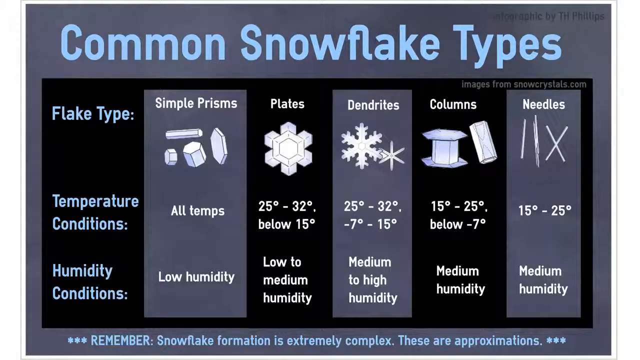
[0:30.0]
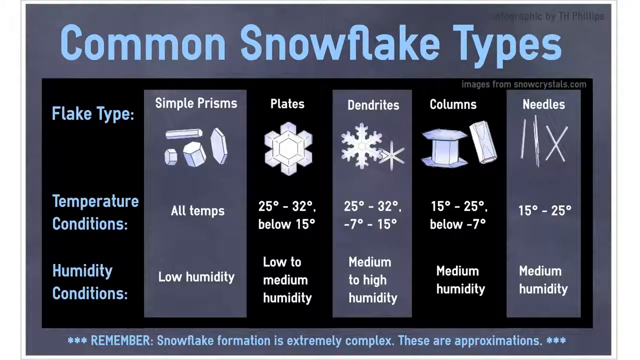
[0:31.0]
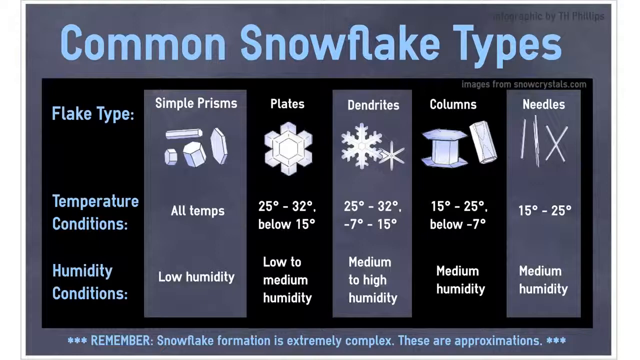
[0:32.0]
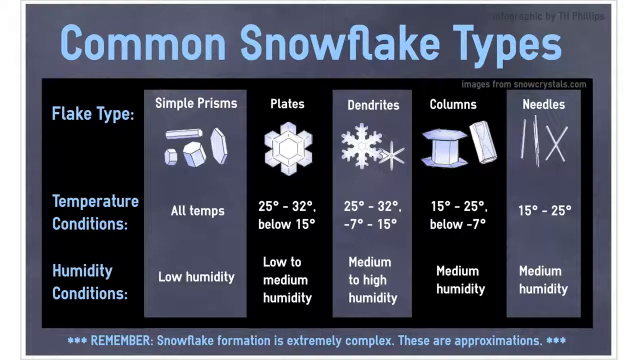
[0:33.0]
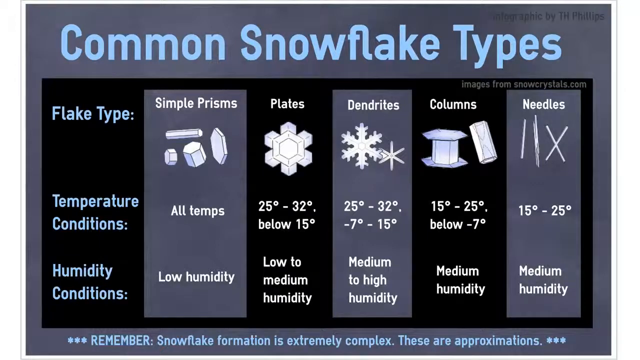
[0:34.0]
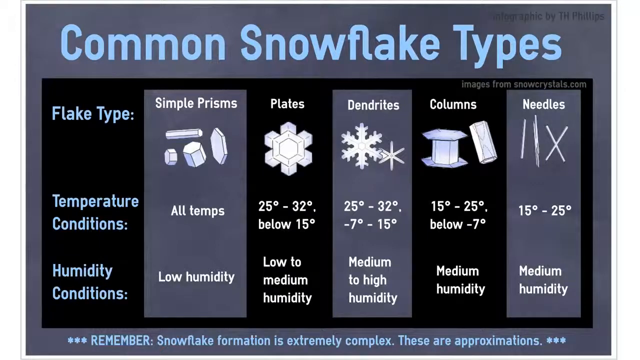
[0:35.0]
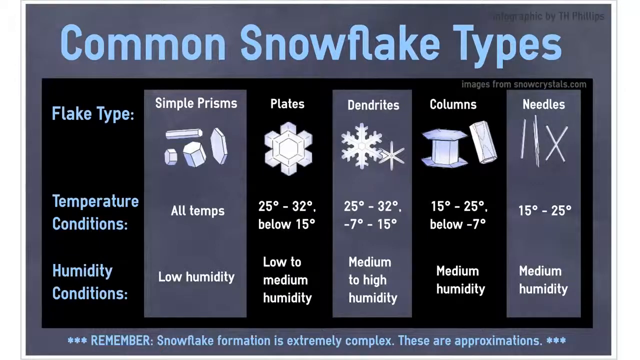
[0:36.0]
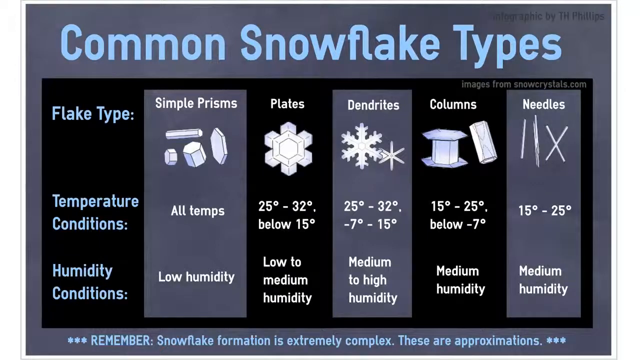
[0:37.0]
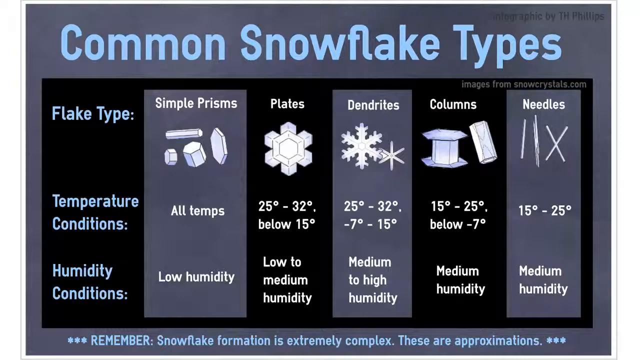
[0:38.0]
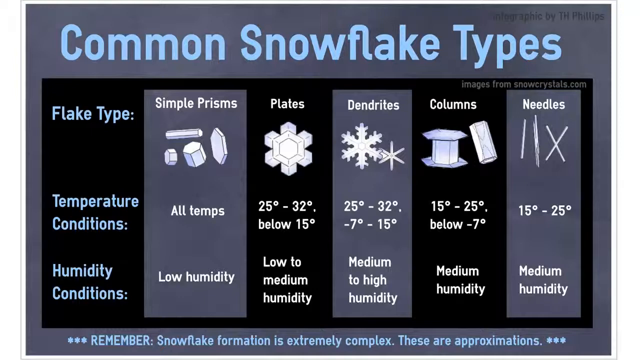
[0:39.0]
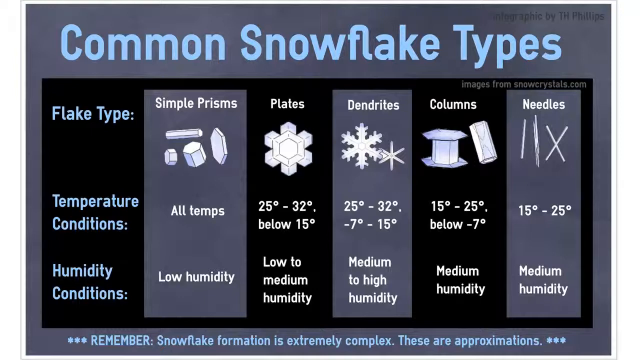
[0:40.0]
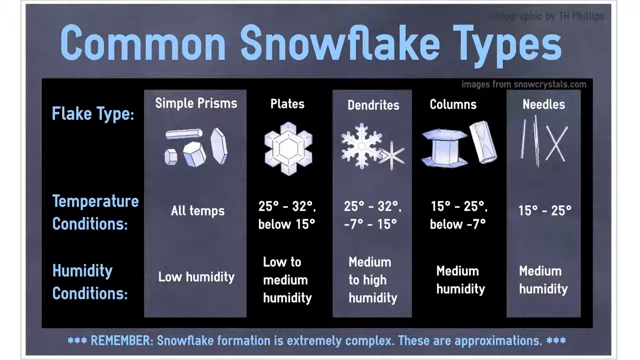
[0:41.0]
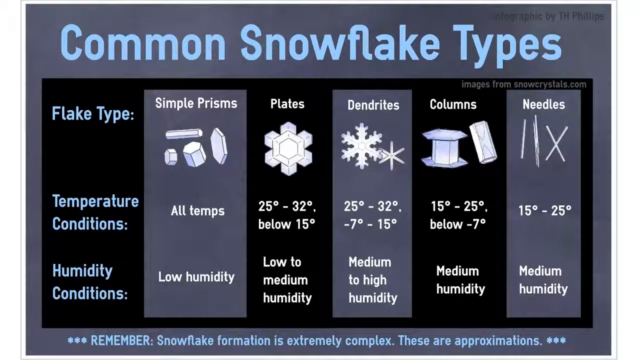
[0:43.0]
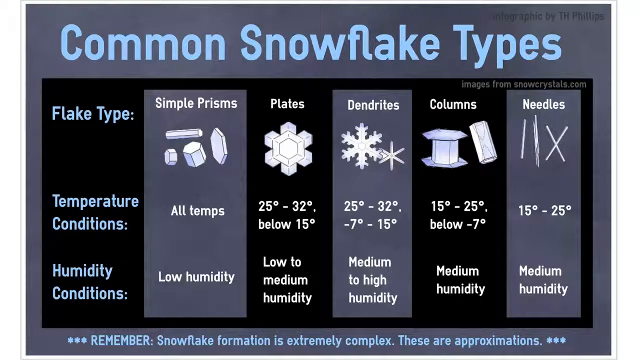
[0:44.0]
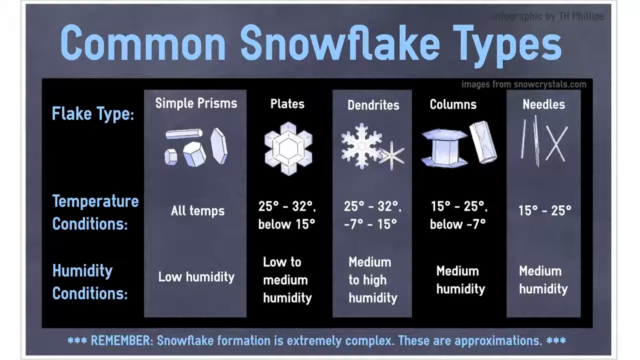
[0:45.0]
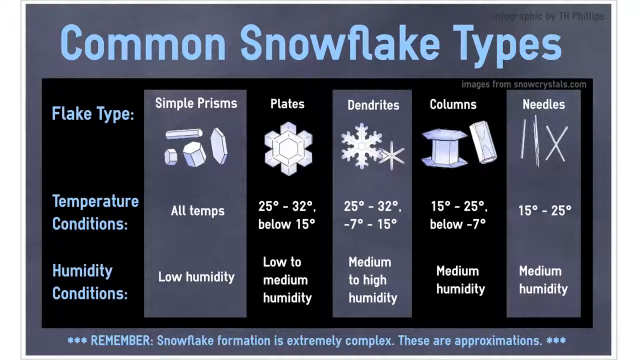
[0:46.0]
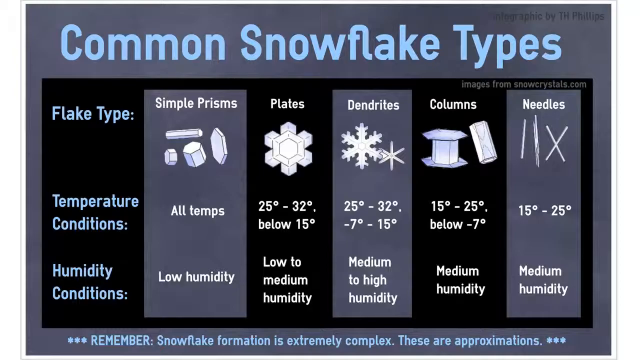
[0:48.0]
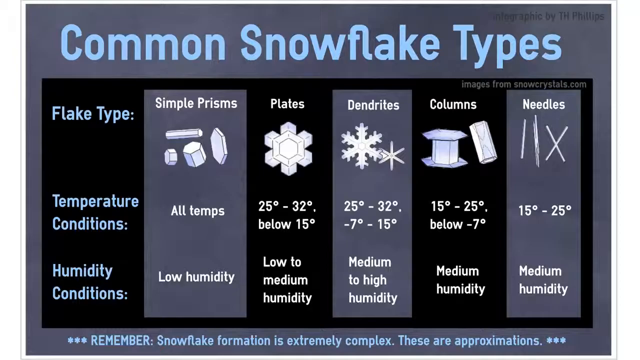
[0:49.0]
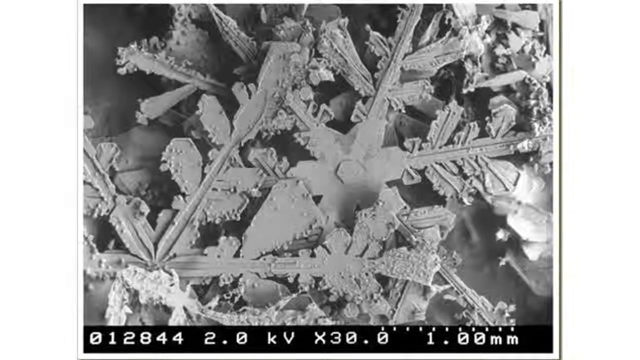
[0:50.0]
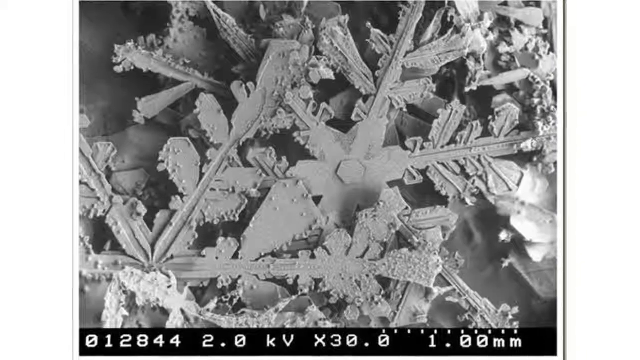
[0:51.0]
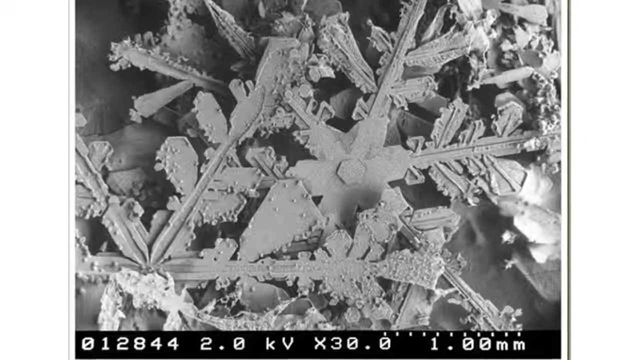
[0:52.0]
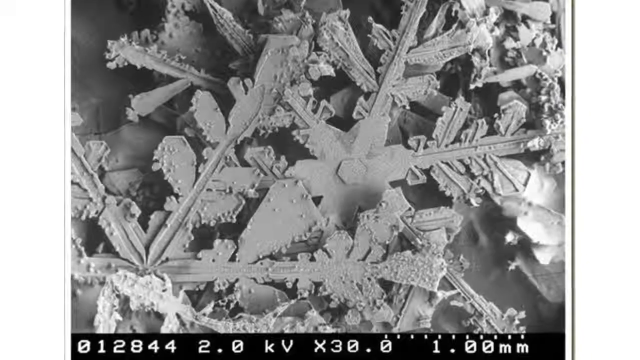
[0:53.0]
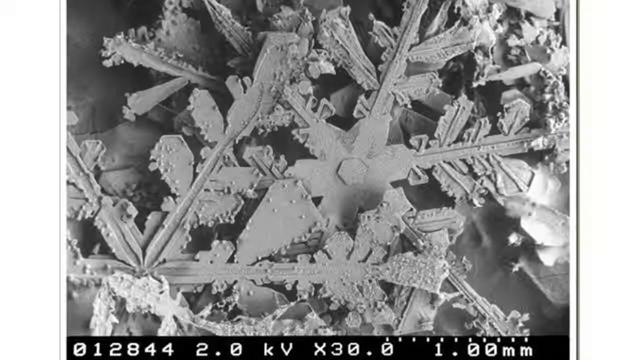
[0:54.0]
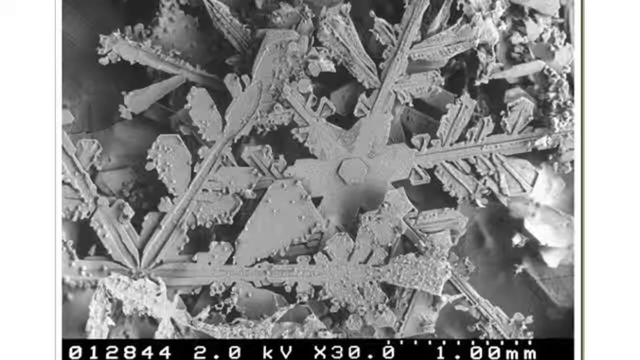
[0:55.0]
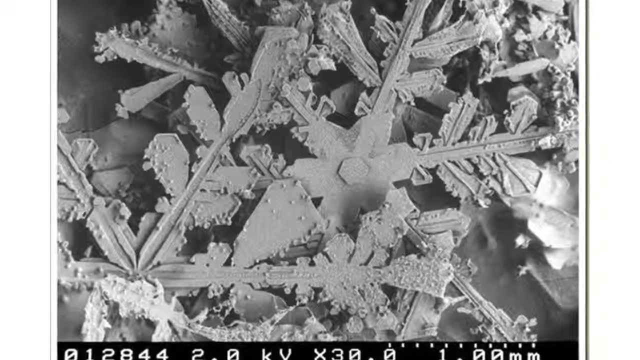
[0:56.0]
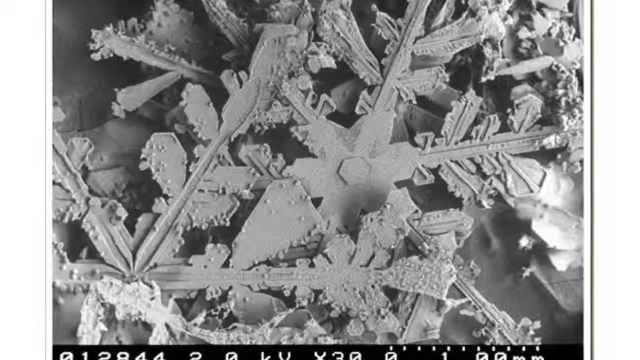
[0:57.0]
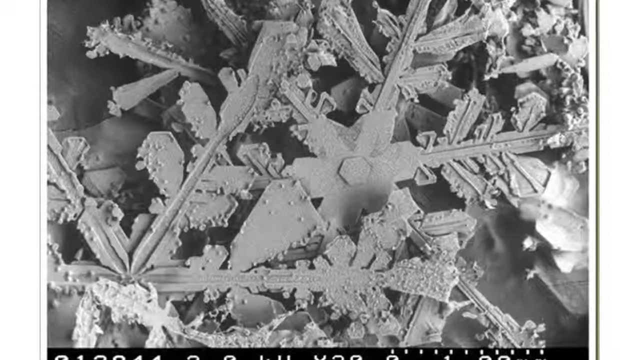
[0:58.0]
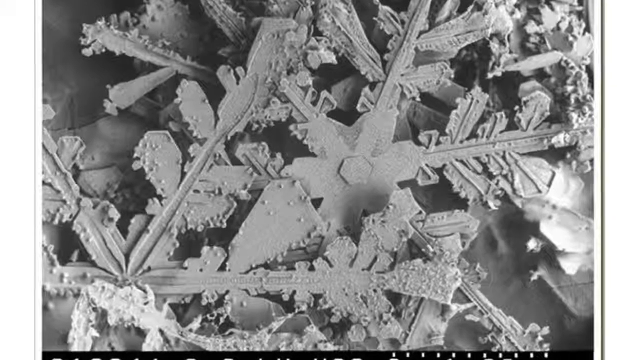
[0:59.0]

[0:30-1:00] More words for snow are listed: the third word is "freeze" and the fourth is "frost." Further words include "glacier," "hail" and "iceberg."